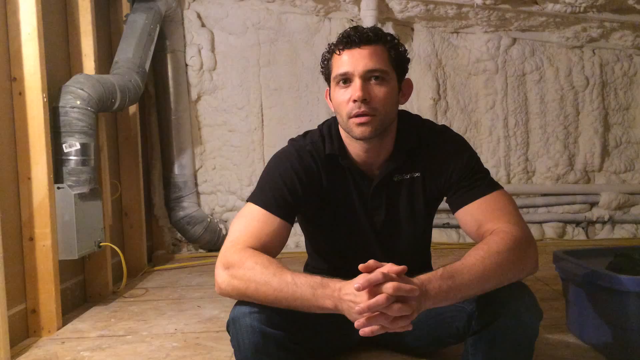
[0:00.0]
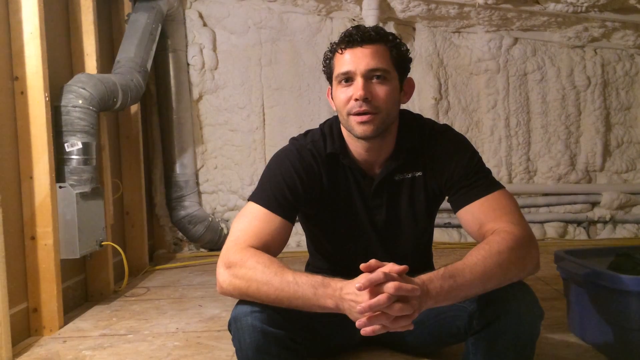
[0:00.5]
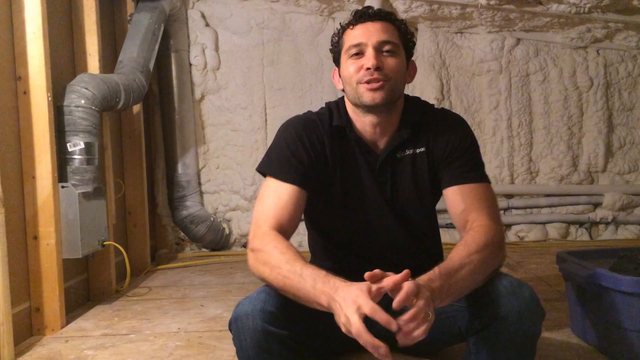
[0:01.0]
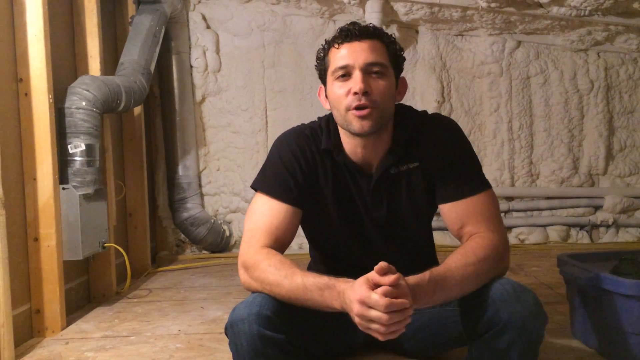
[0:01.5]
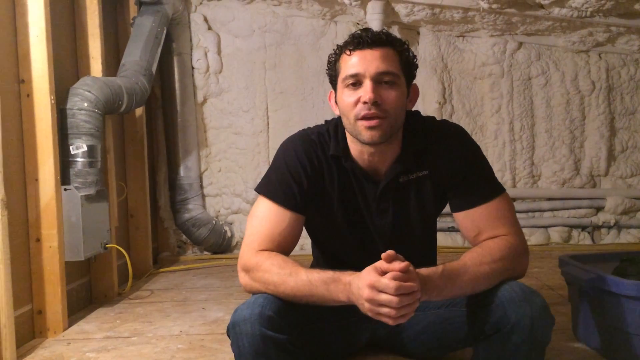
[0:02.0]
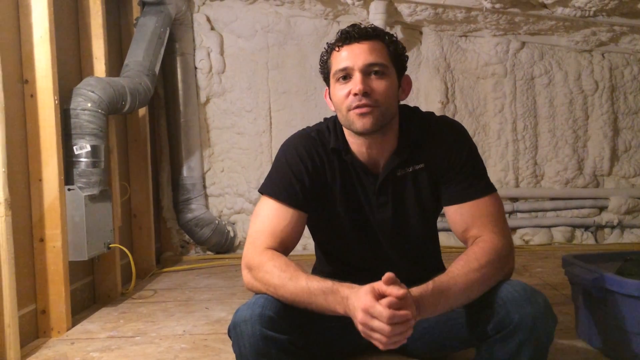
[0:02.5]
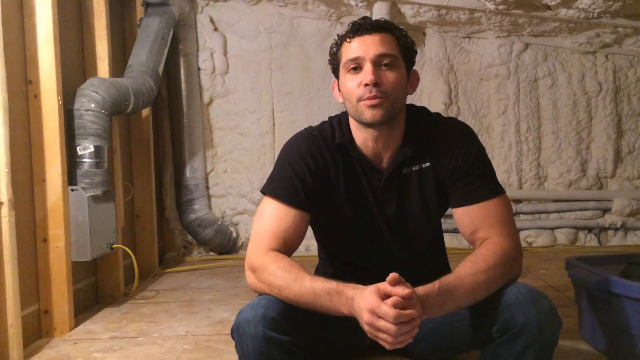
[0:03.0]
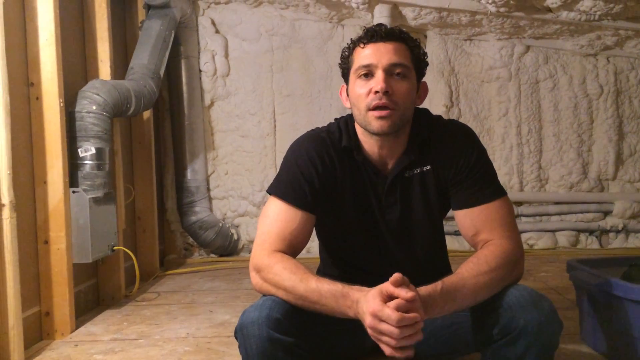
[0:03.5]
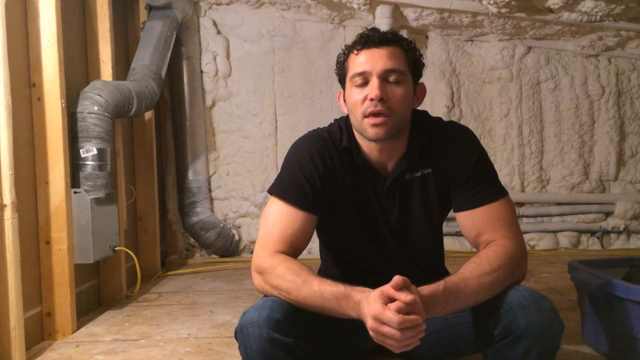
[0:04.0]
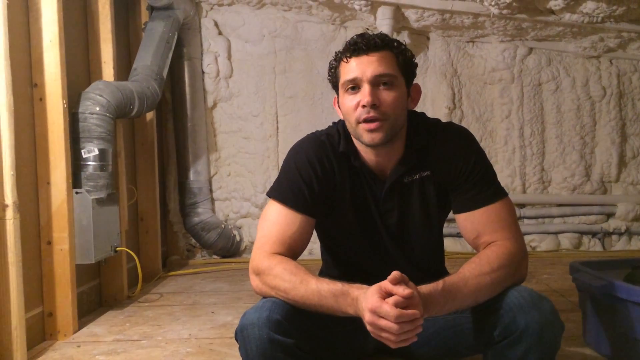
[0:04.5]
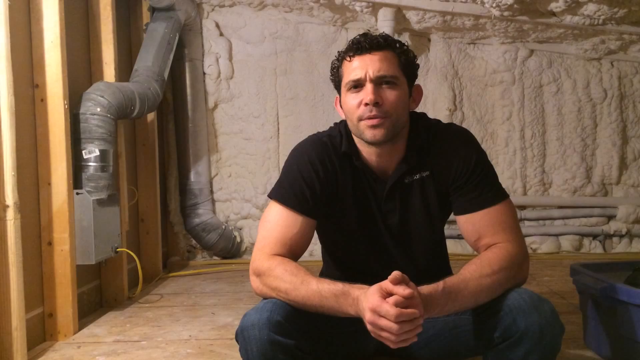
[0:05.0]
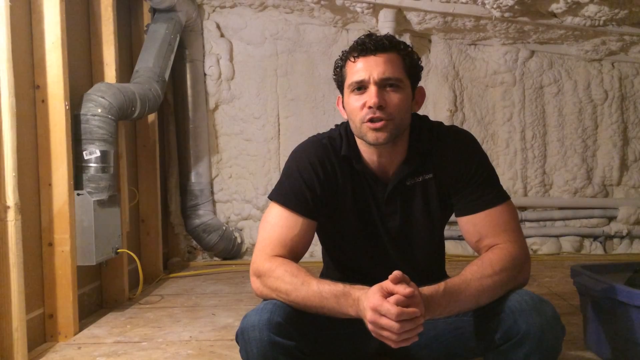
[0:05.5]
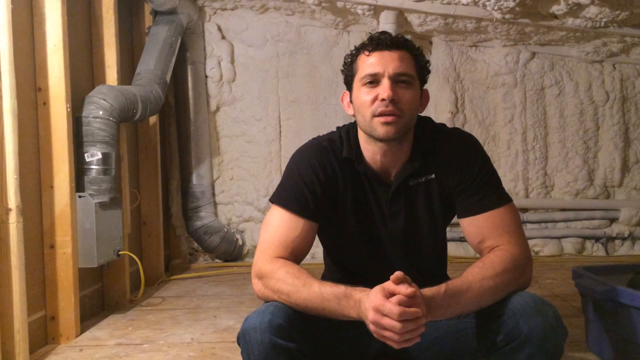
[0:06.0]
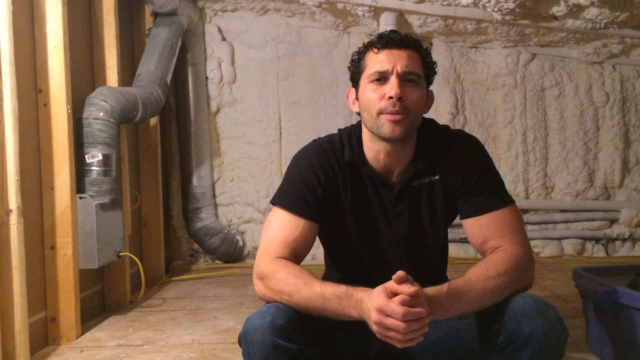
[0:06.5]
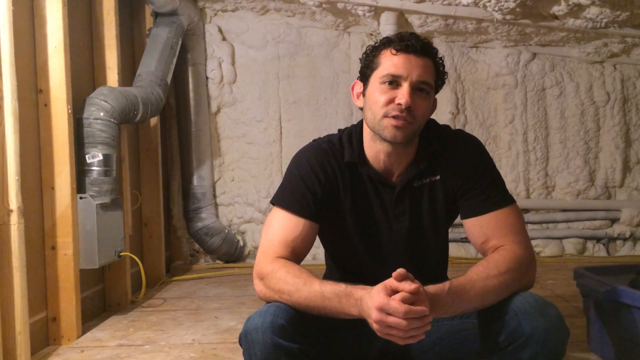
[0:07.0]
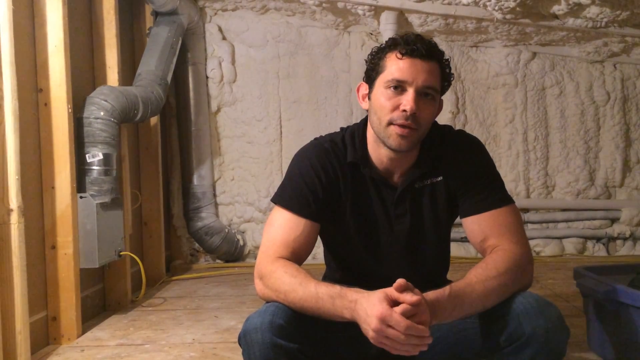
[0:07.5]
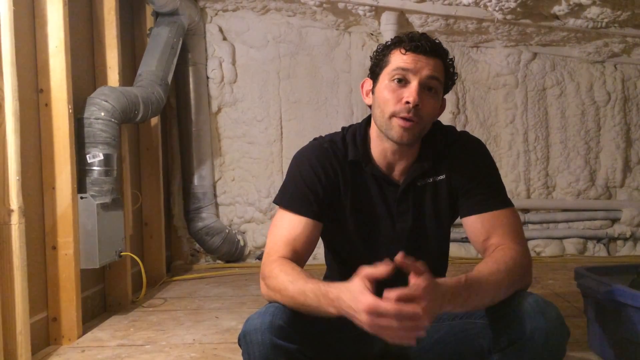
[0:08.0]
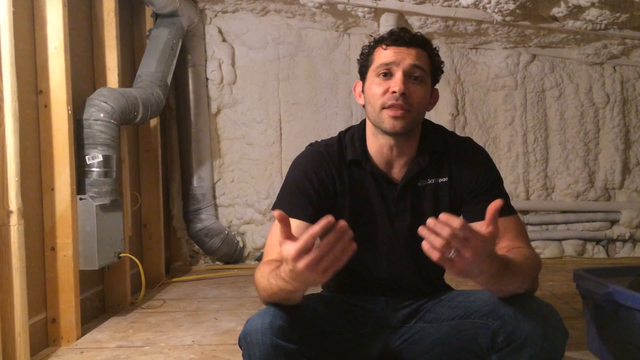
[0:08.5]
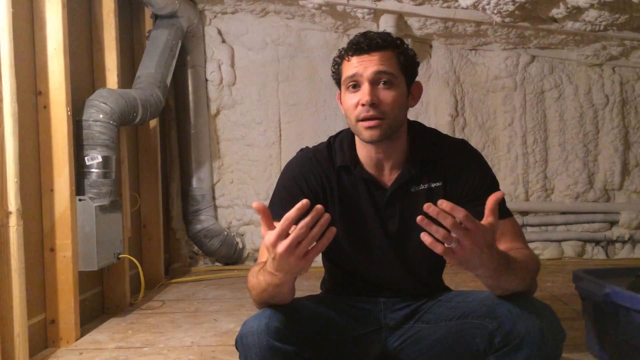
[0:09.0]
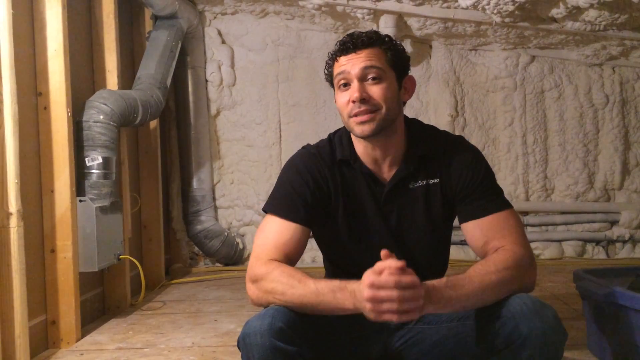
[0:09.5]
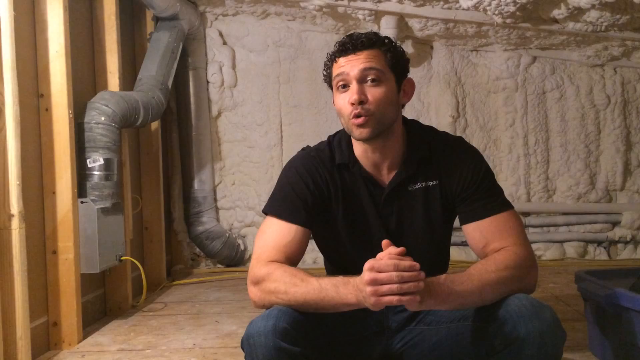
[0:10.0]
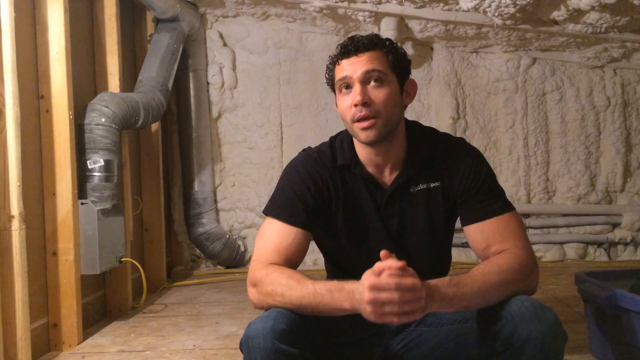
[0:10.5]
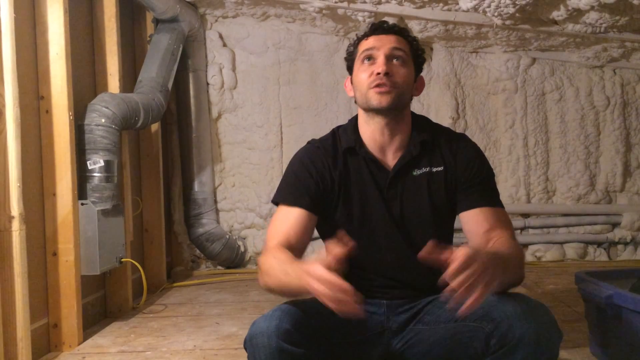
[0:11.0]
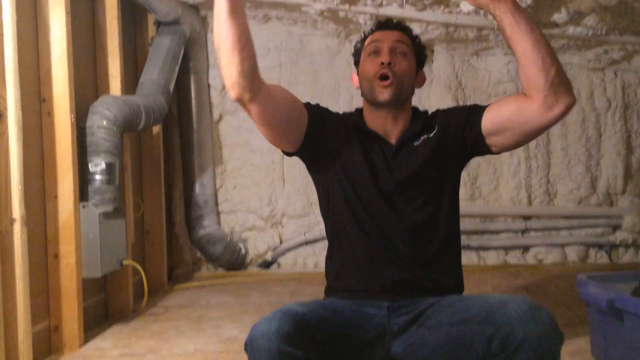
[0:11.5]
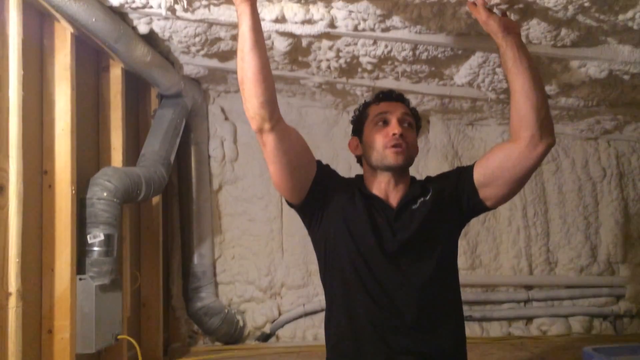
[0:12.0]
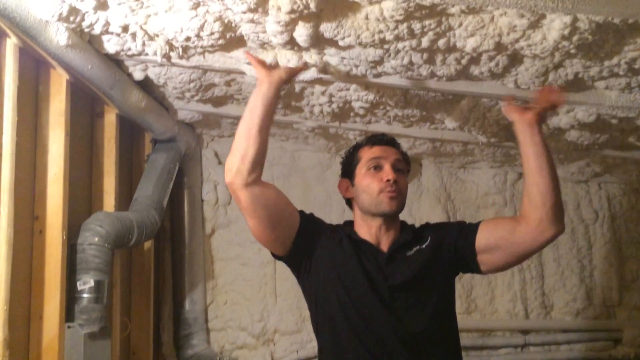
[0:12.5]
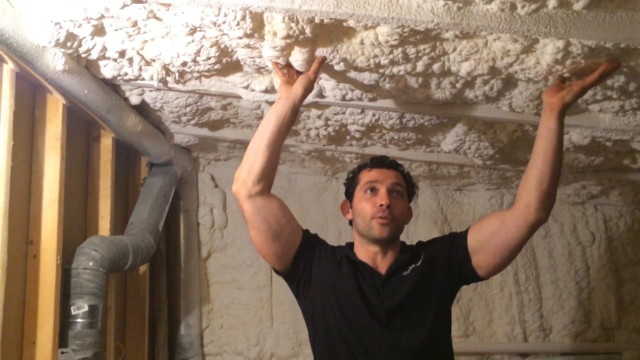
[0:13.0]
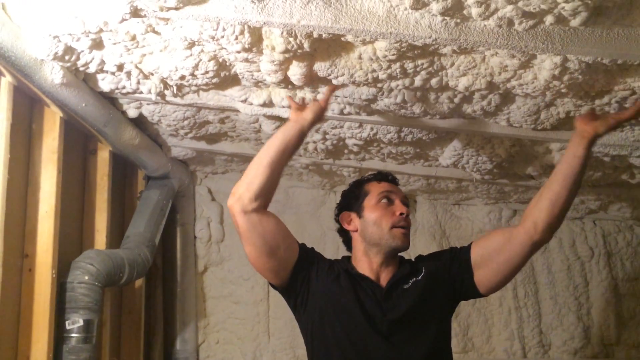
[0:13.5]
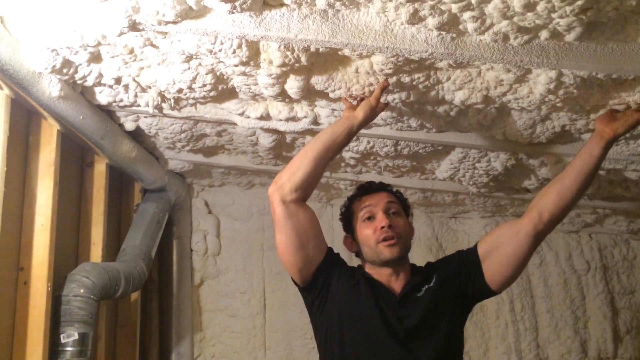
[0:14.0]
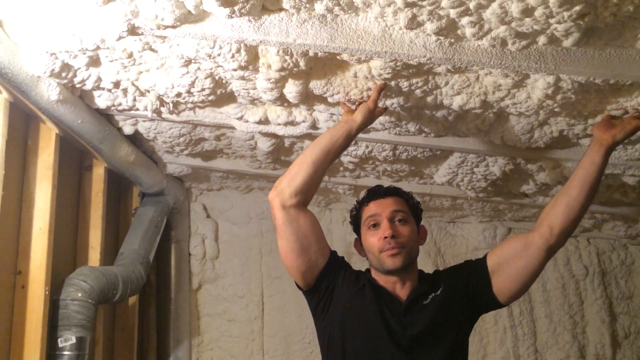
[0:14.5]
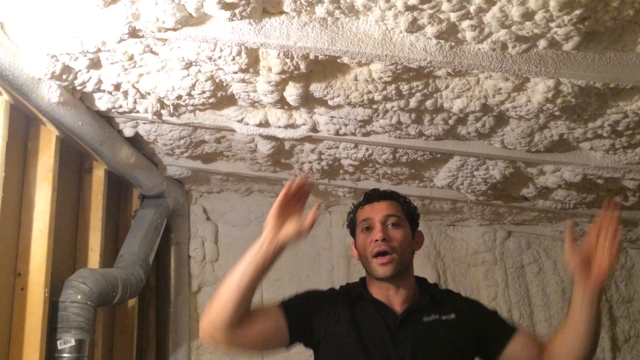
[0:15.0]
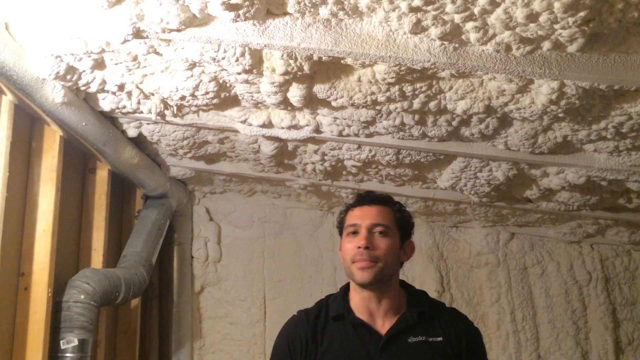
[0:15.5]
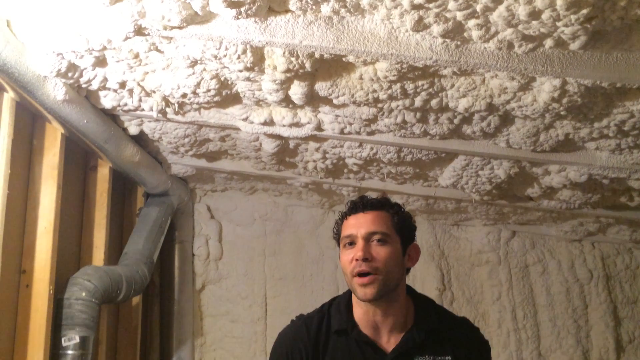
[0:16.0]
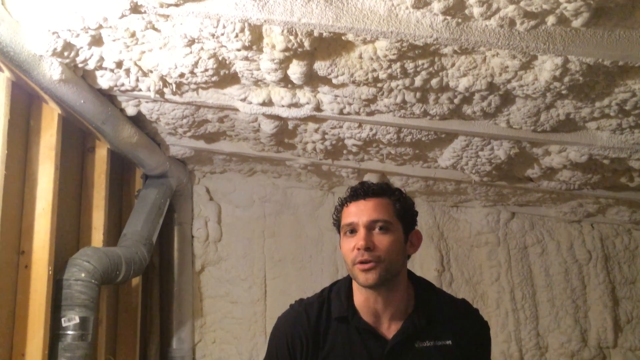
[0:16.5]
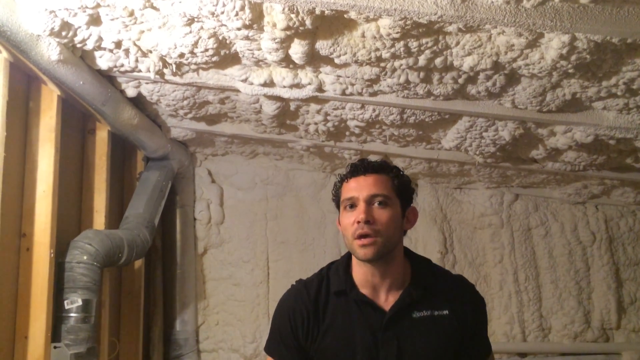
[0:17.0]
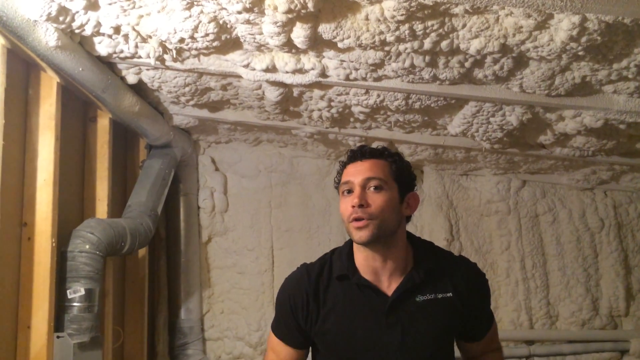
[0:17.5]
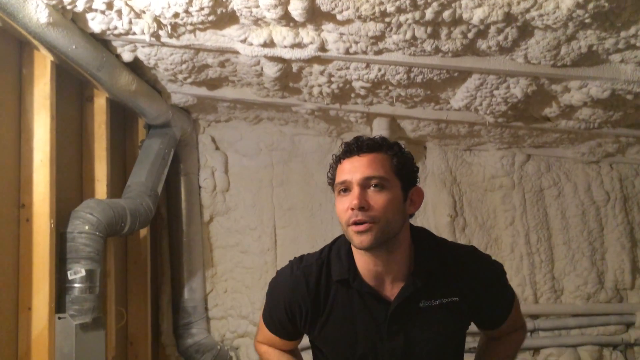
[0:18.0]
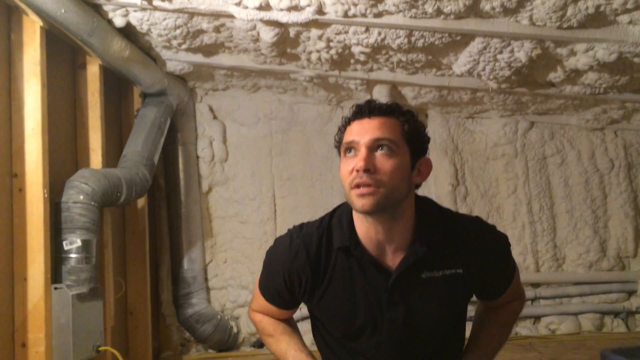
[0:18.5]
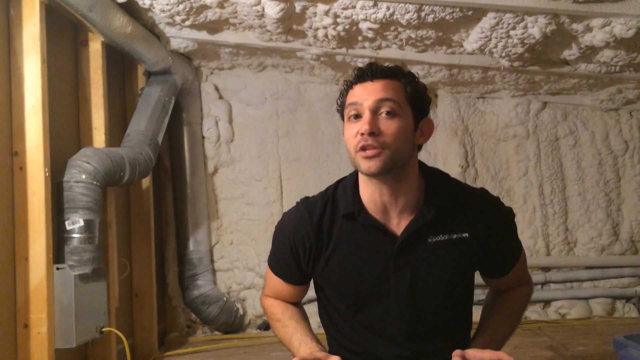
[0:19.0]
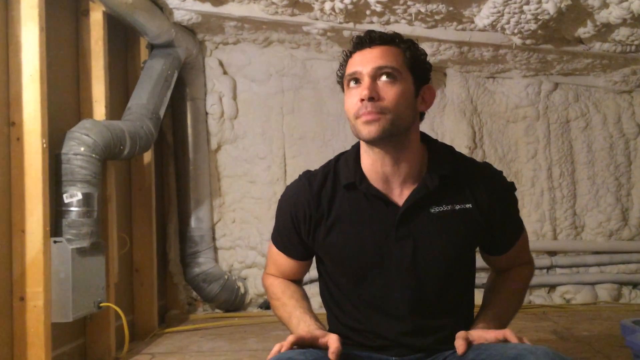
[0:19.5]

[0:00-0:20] A man in a black shirt appears to be in a cooler room. There is a pipe, a cooler pipe, and a container that looks full of water. The man seems to be explaining and talking about the room. The room seems unfinished, still being built. He then shows the roof of the room. It is mostly just one big room.